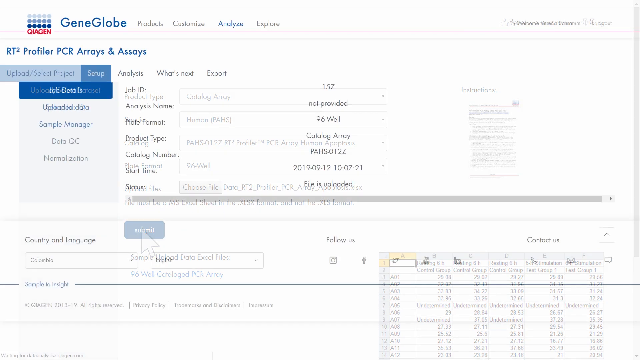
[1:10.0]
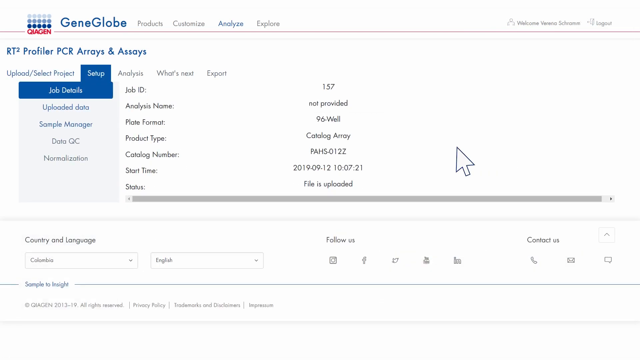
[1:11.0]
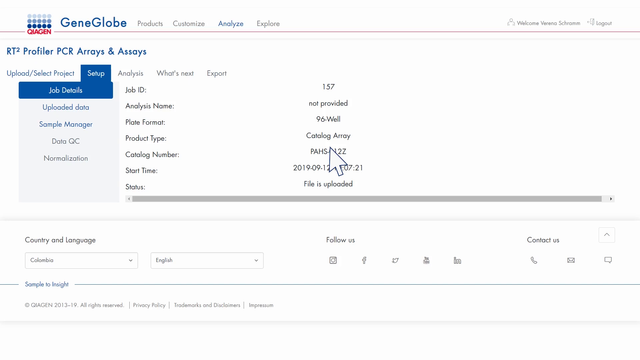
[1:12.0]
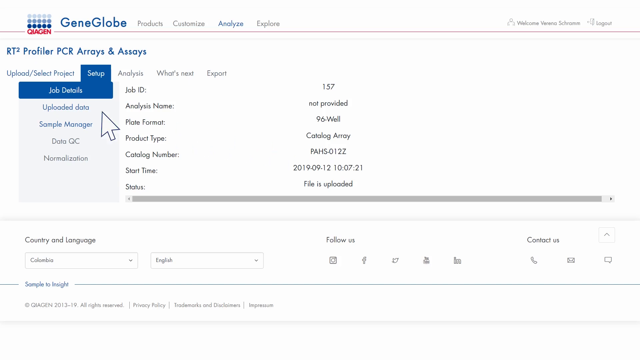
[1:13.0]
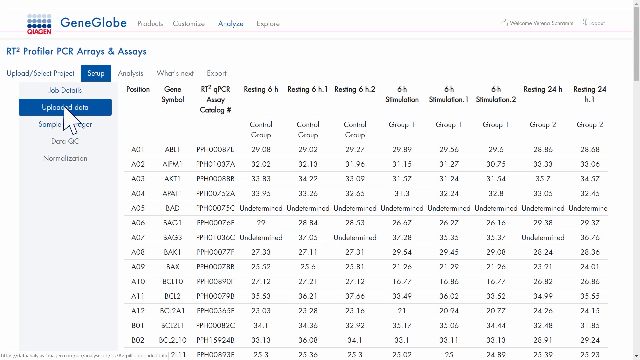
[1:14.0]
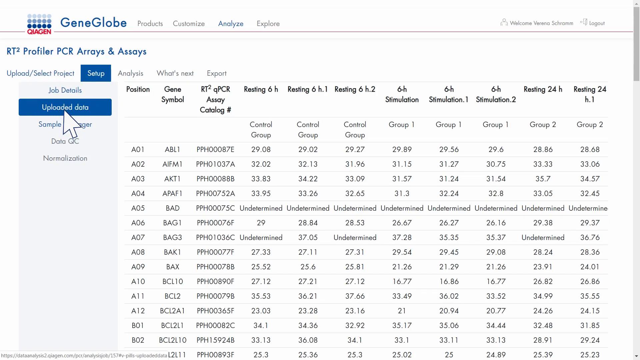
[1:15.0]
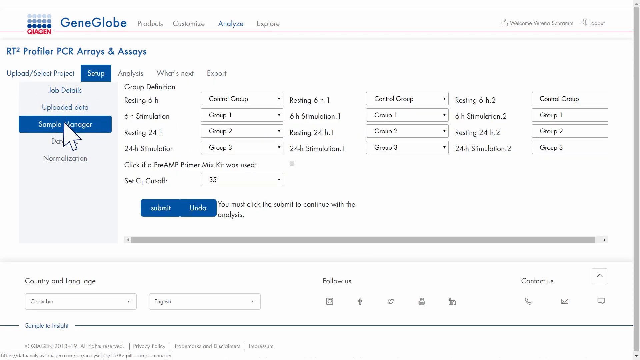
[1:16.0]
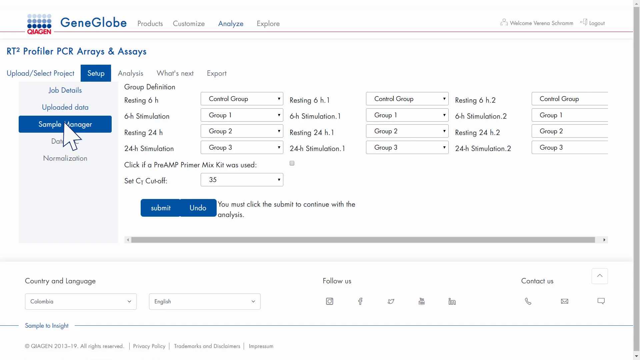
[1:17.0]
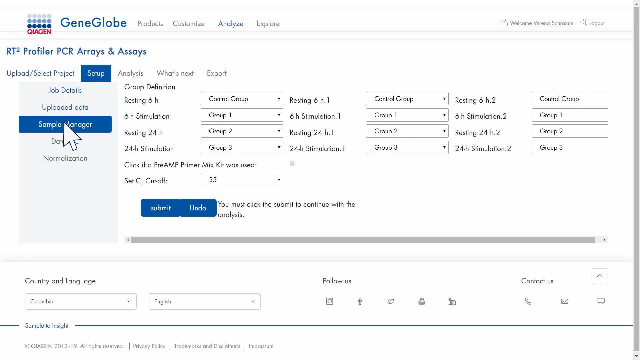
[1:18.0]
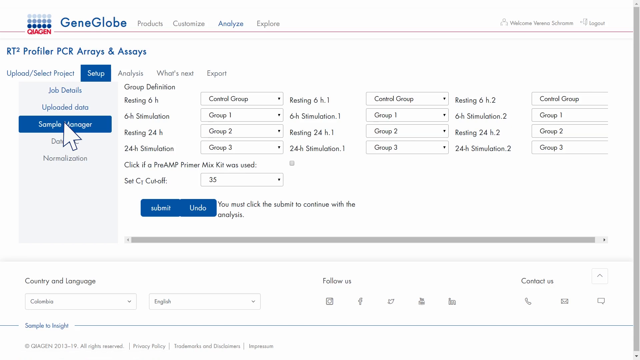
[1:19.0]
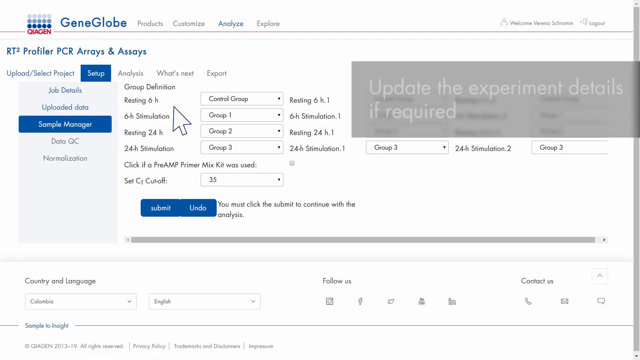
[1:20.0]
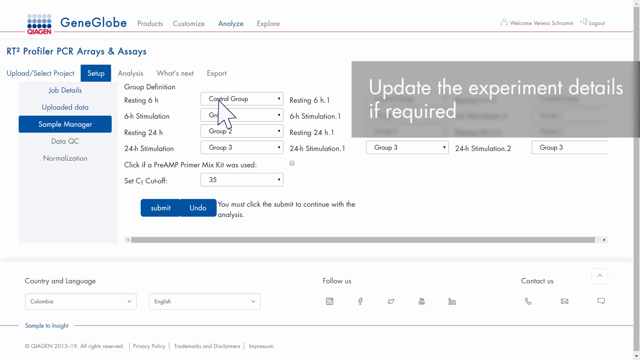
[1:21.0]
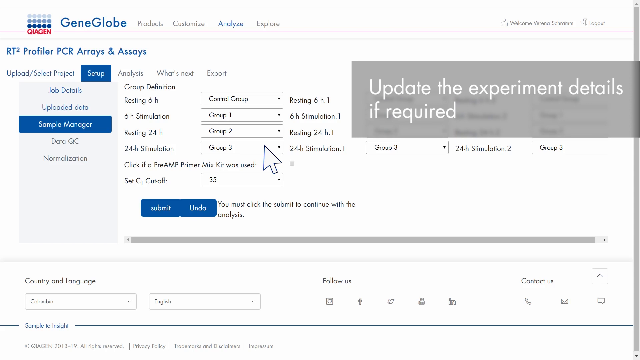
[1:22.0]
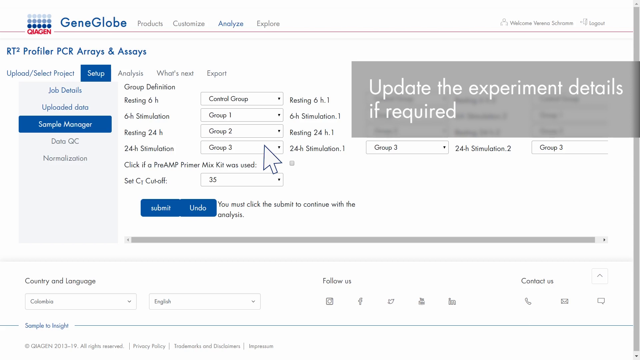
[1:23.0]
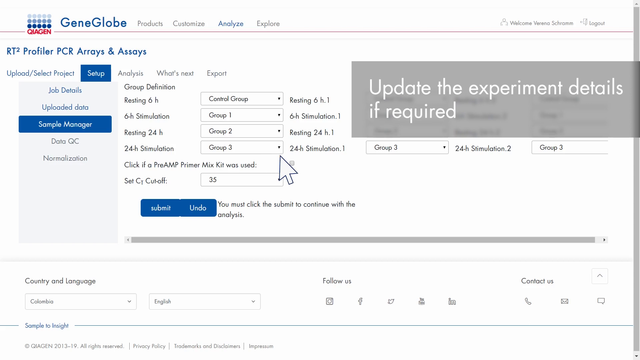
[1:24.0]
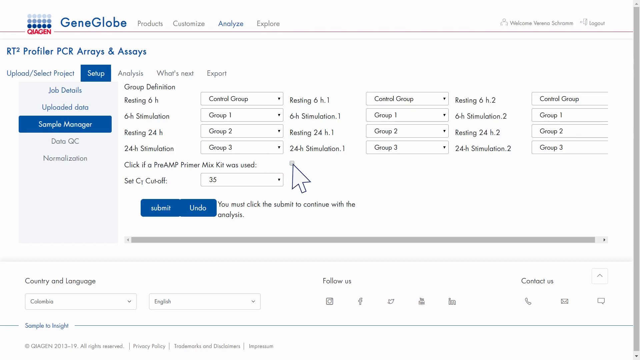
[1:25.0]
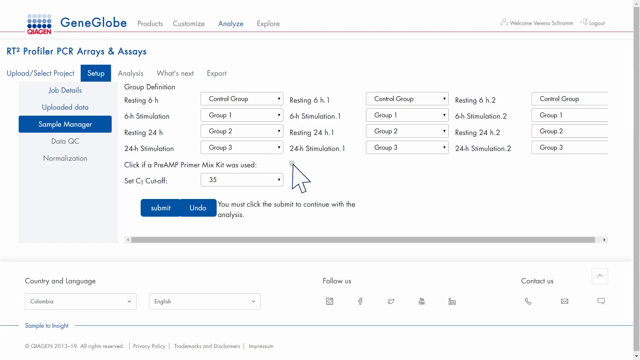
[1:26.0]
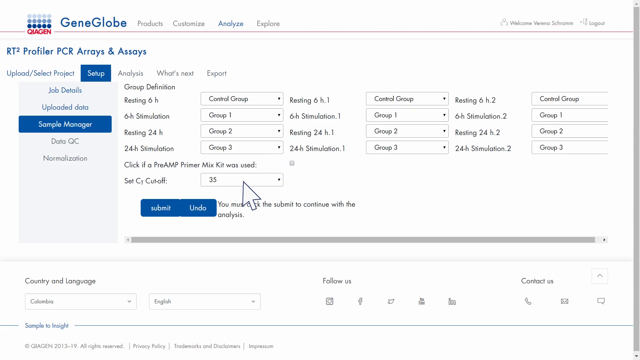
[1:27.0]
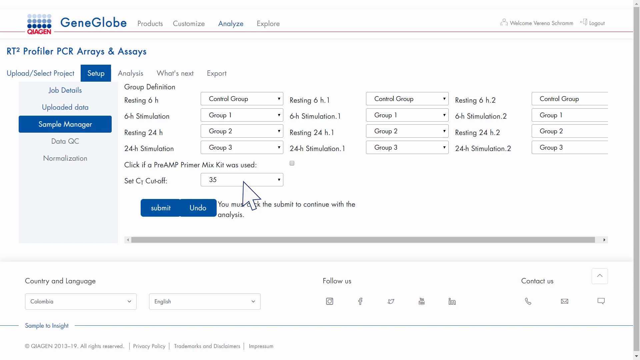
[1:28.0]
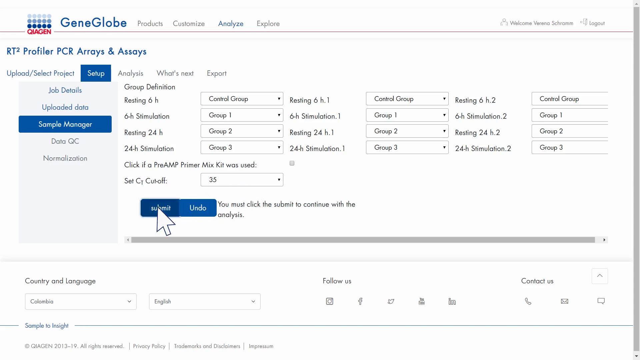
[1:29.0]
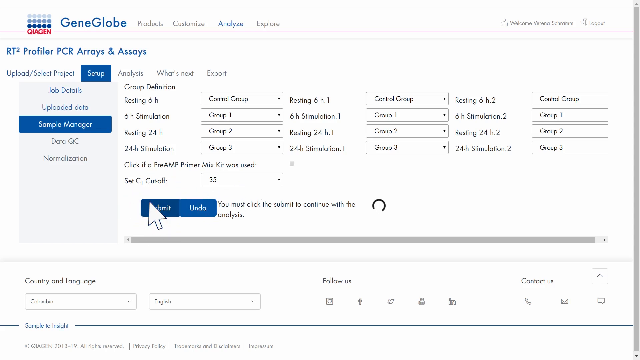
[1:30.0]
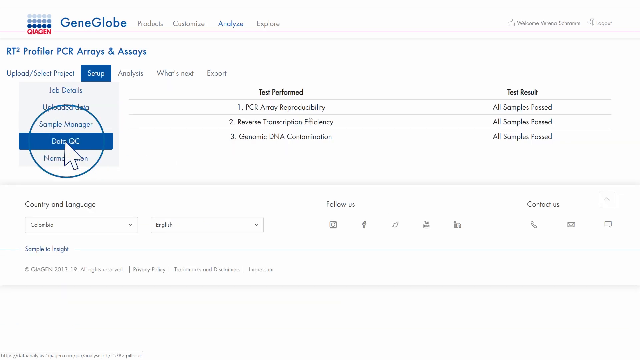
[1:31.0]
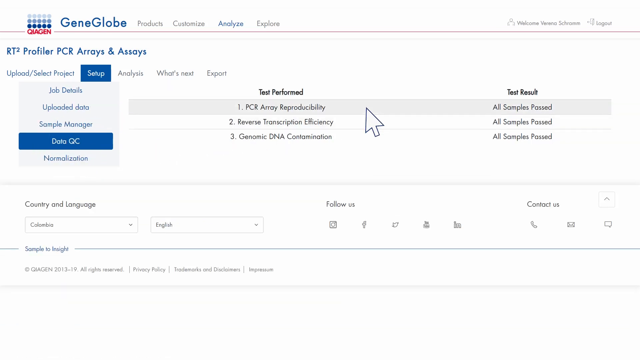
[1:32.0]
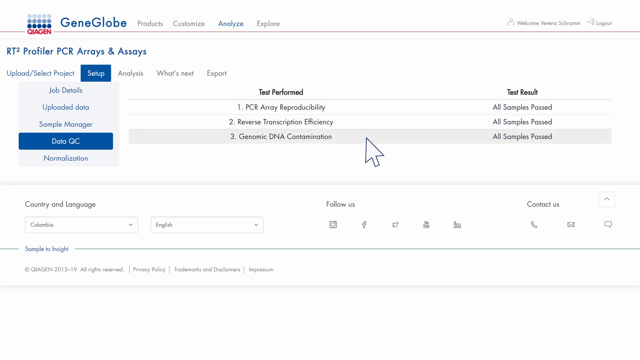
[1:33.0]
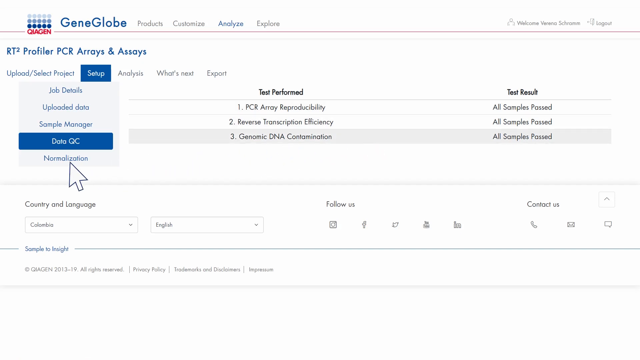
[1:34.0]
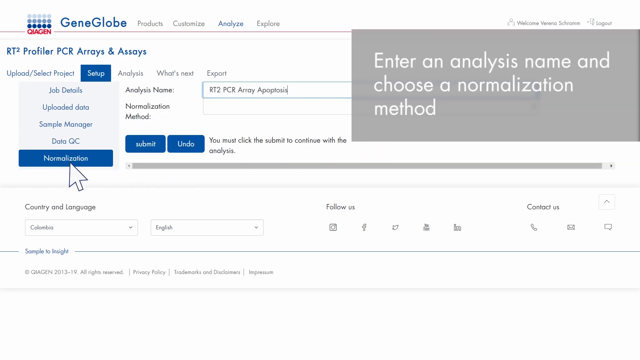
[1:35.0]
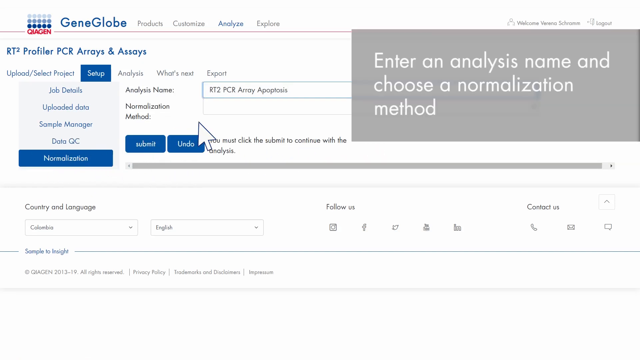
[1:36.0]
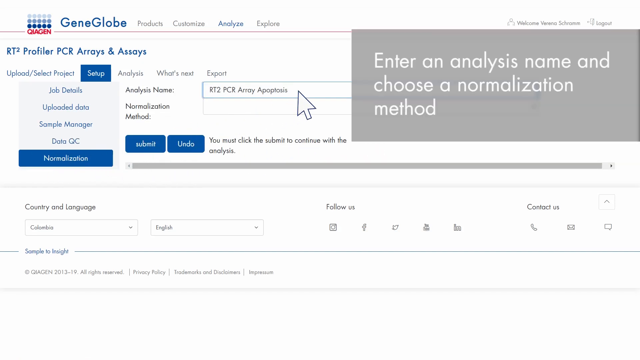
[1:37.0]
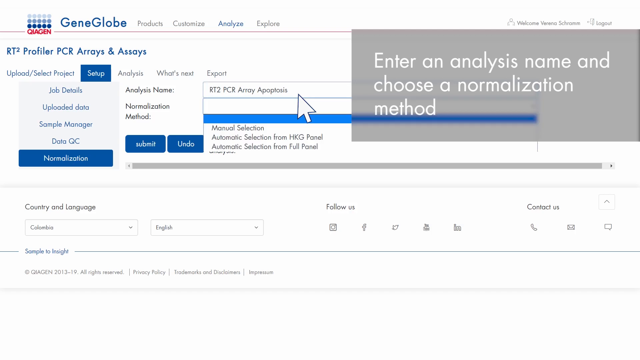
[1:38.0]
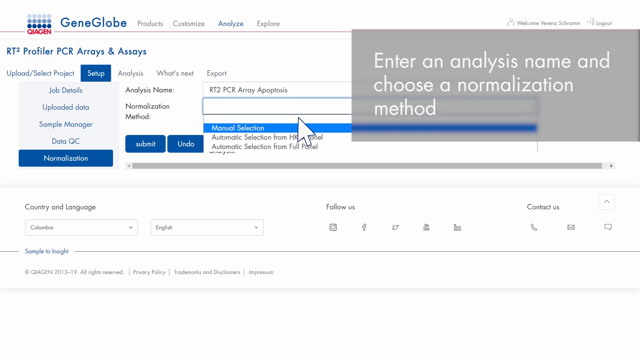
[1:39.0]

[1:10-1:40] The video cuts to a GeniClub page for profiler arrays and assays. Below are tabs for upload, select projects, setup, analysis, what's next and export. Under setup there are job details, uploaded data, sample manager, data QC and normalization. On the right side of job details are job ID 157, analysis name not provided, plate format 96-well, product type catalog array, catalog number P-H-S-0-1-2-Z, start time 2019-9-12-10-0-7, and status file is uploaded. Below that, country and language show Columbia, English, and on the right are follow-us links for Instagram, Facebook, Twitter, YouTube and something else, plus contact options by phone, email or messaging. At the bottom it says "sample to insight". The uploaded data page is then opened, showing a position and gene symbol column and multiple options for the control group, group one and group two.